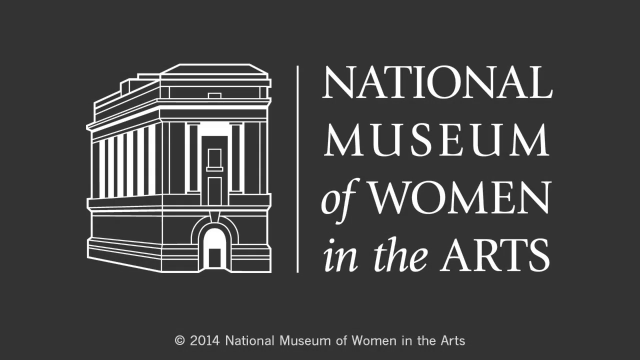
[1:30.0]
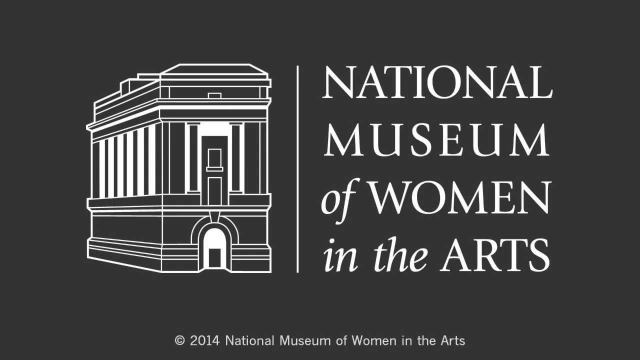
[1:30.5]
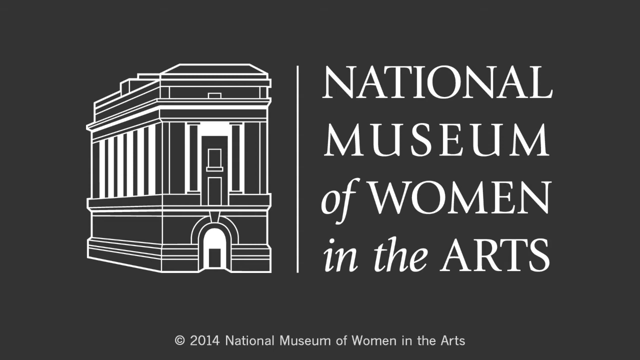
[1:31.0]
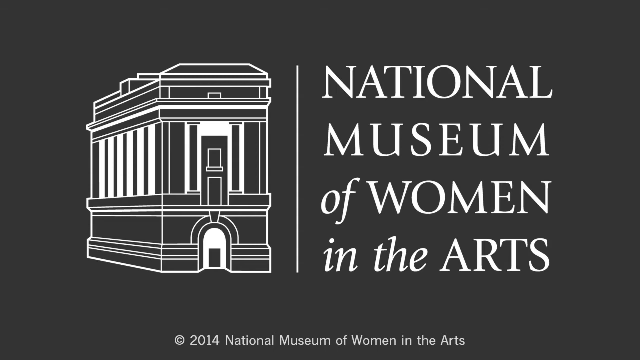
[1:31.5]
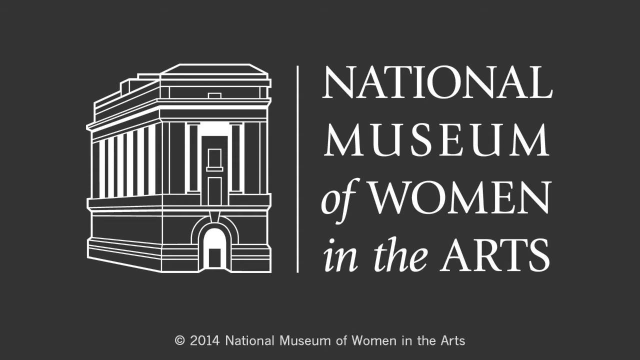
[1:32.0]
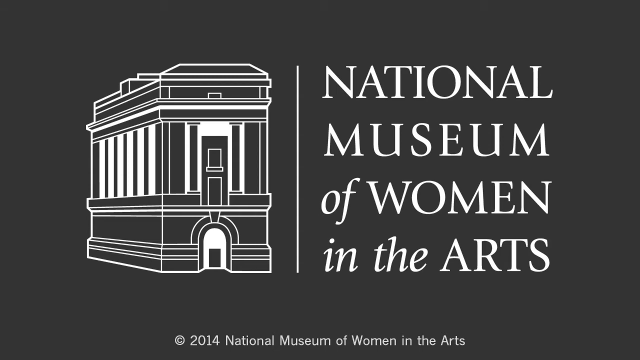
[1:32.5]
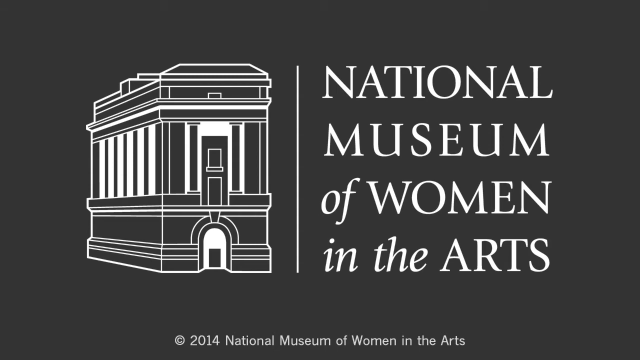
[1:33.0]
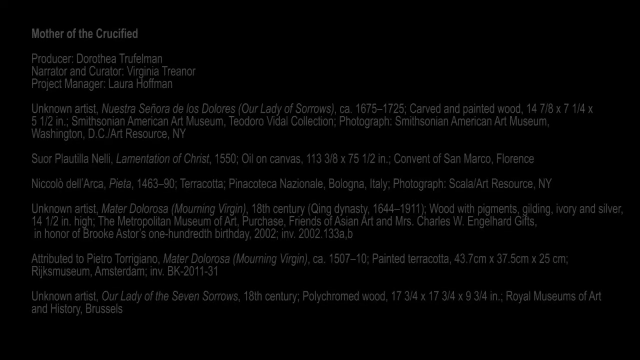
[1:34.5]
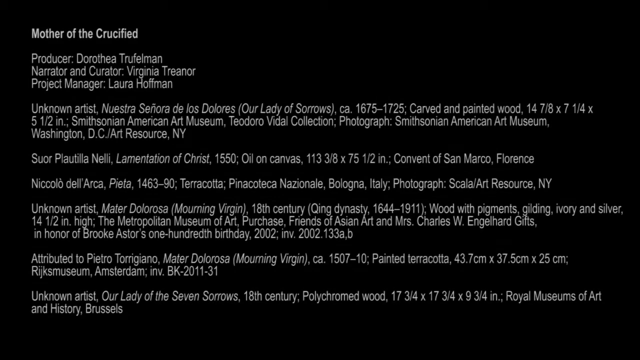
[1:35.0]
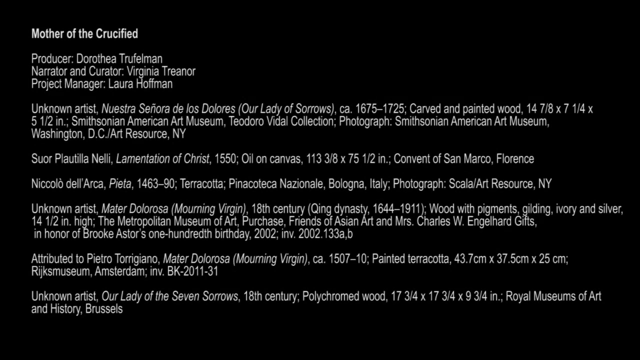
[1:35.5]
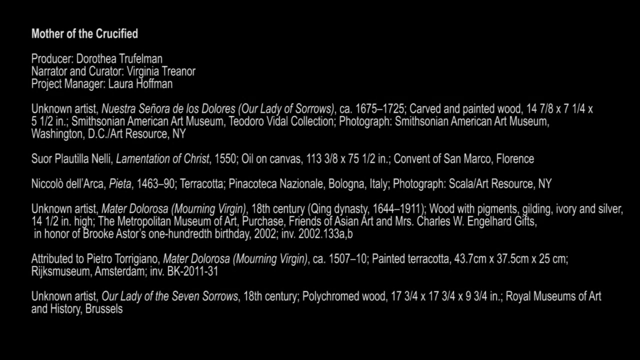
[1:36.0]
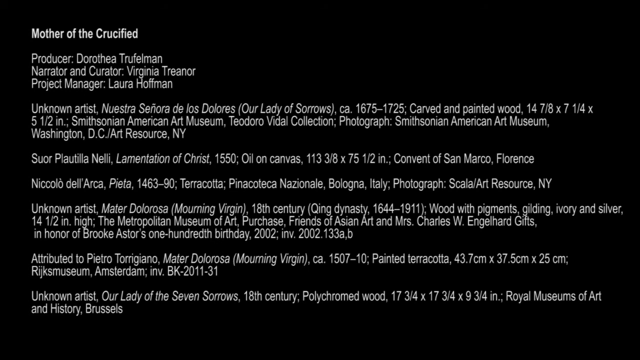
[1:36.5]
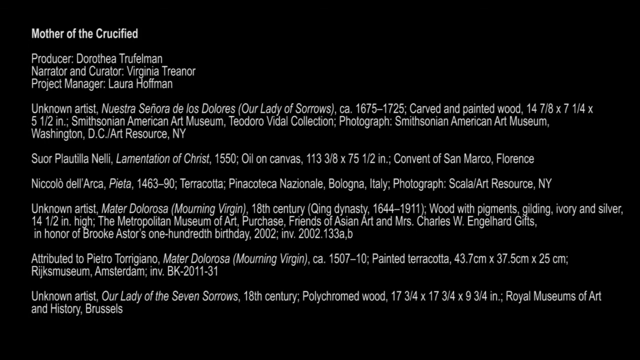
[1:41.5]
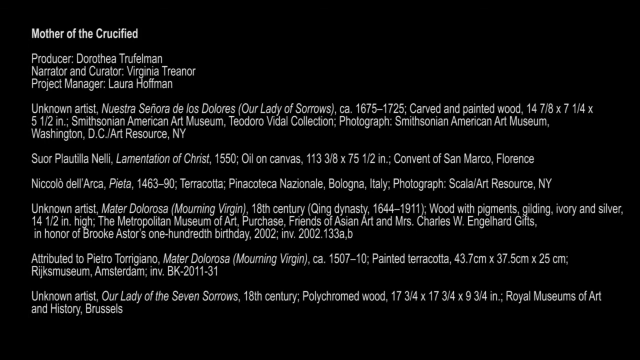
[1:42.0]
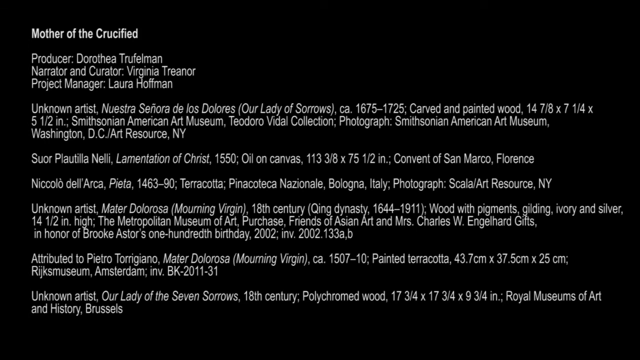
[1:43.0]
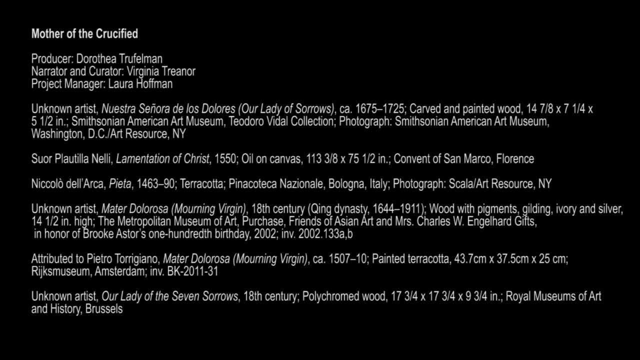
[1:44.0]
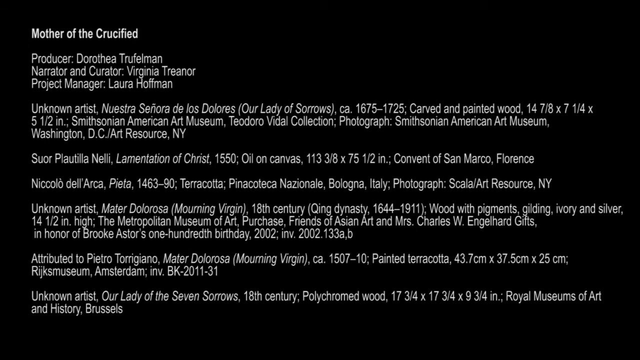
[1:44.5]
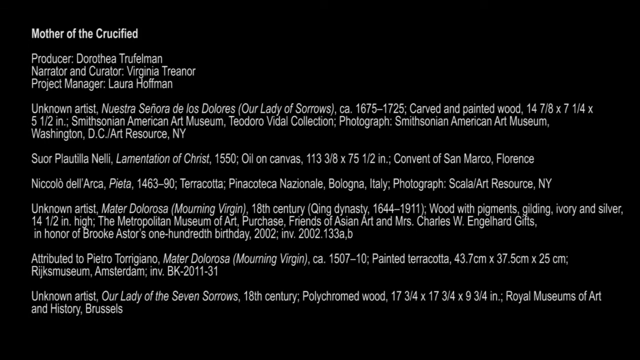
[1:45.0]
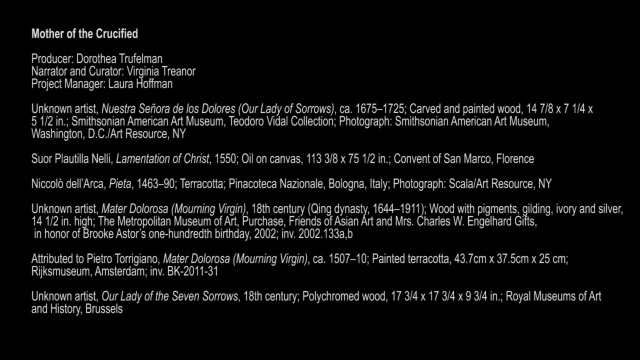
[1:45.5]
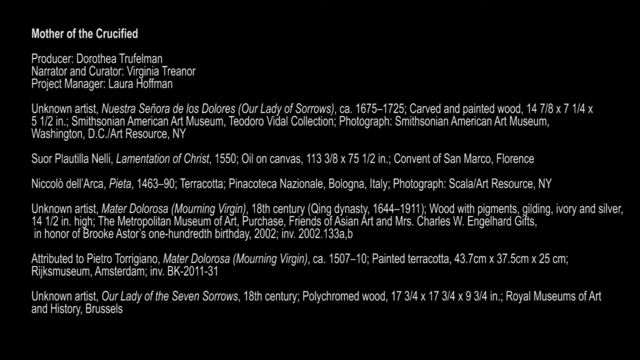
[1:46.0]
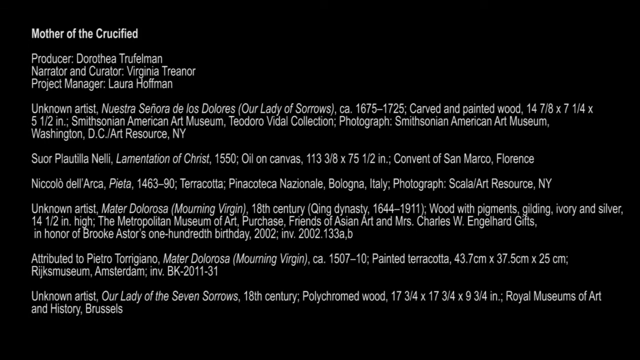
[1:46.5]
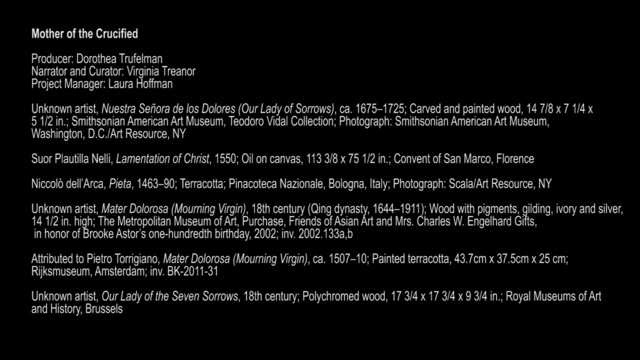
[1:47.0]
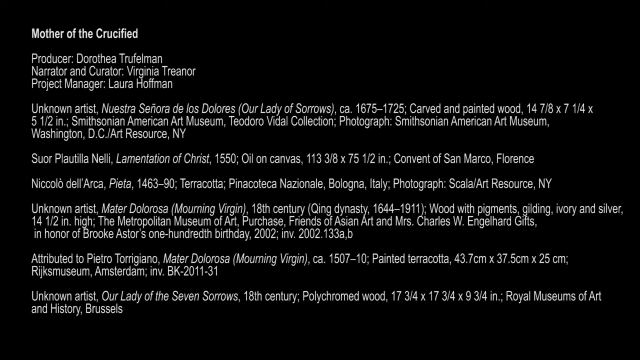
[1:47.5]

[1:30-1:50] What looks like a title card reads "National Museum of Women in the Arts," with a drawing of a large building on the left. The video cuts to black, and production text appears reading "mother of the crucified producer Dorothea Truffleman, narrator, project manager Laura Hoffman." Text then summarizes the statues featured, including "Señora de los Dolores" and "unknown artist," along with the years the works were created and where they are from; the entry dated 1675 to 1725 is listed as carved and painted wood. This screen stays up for a few seconds.